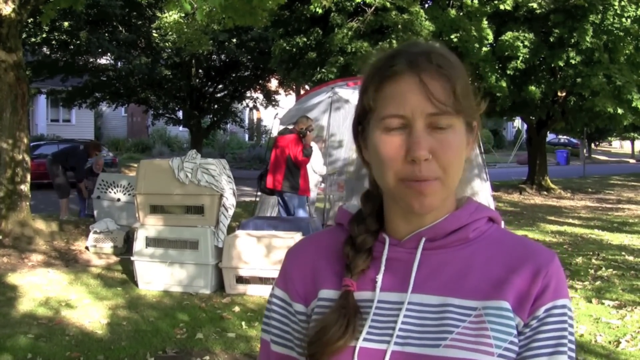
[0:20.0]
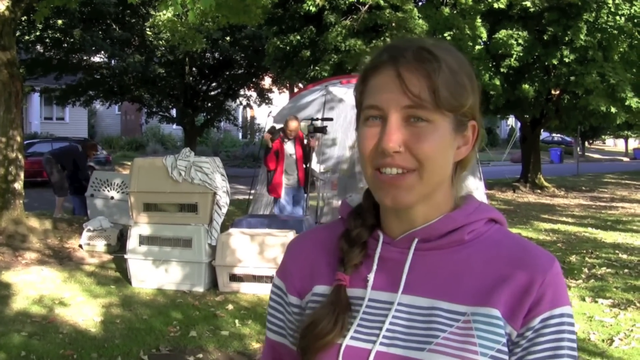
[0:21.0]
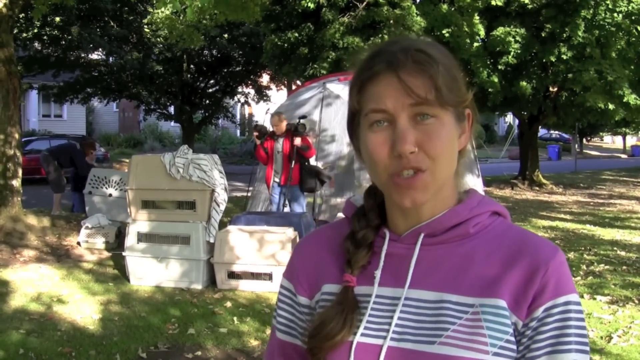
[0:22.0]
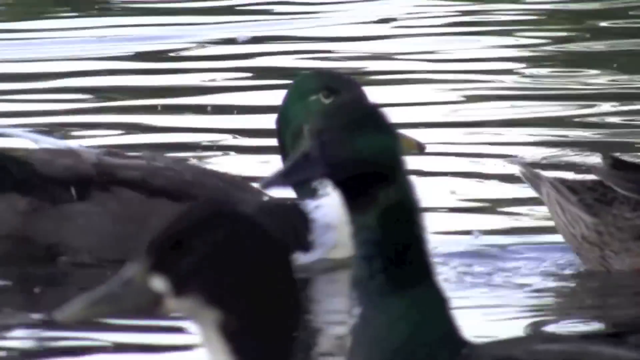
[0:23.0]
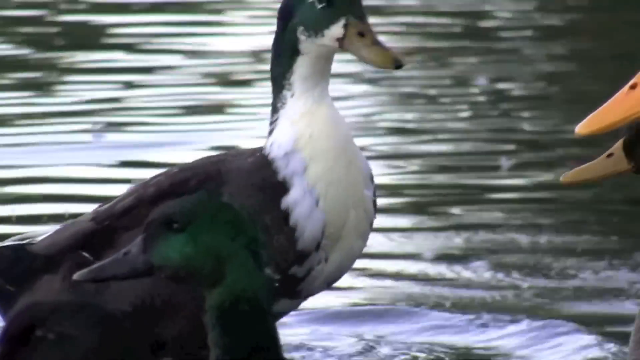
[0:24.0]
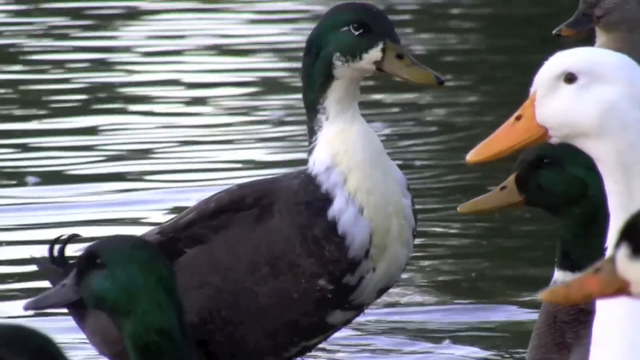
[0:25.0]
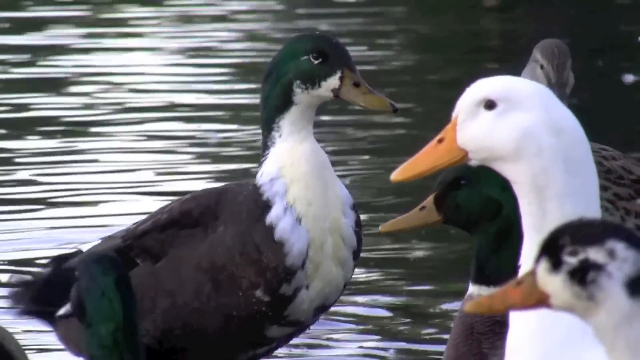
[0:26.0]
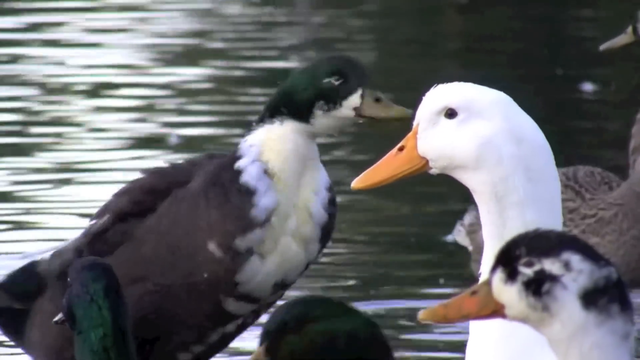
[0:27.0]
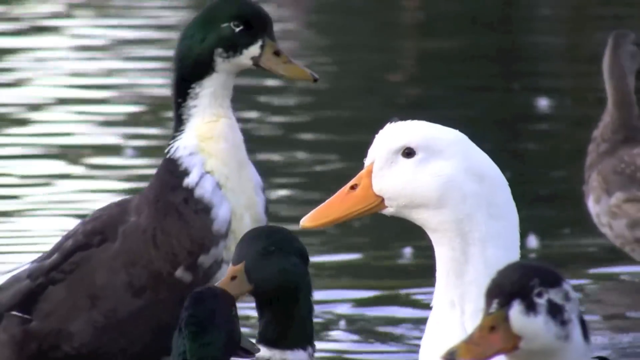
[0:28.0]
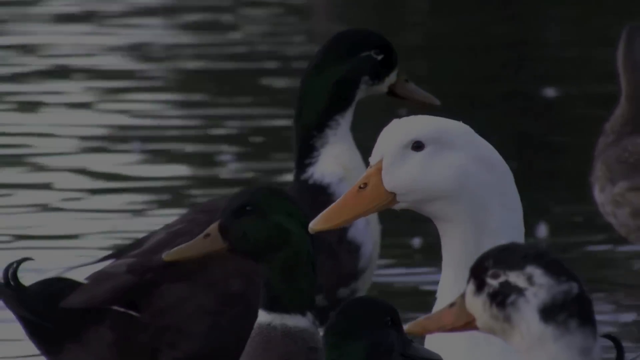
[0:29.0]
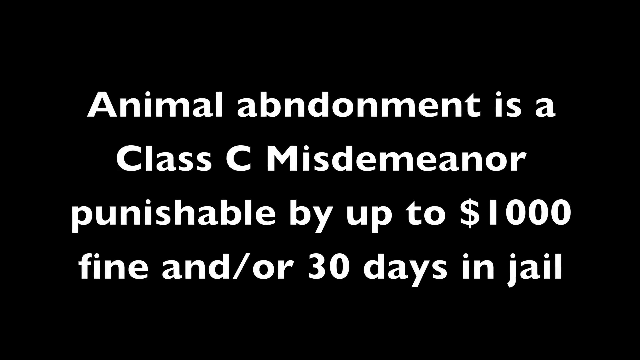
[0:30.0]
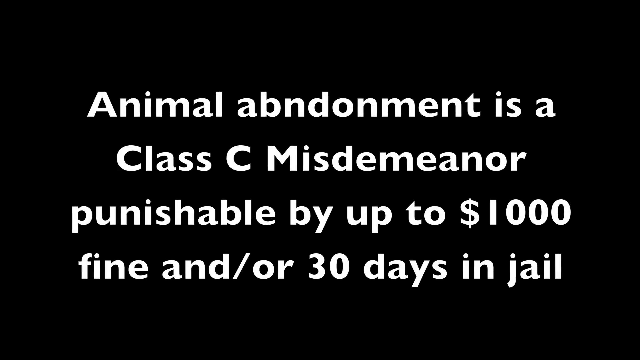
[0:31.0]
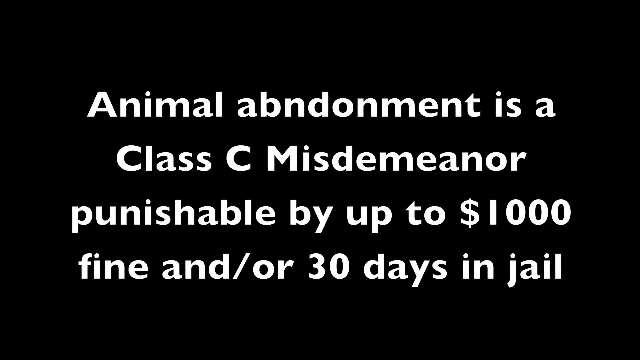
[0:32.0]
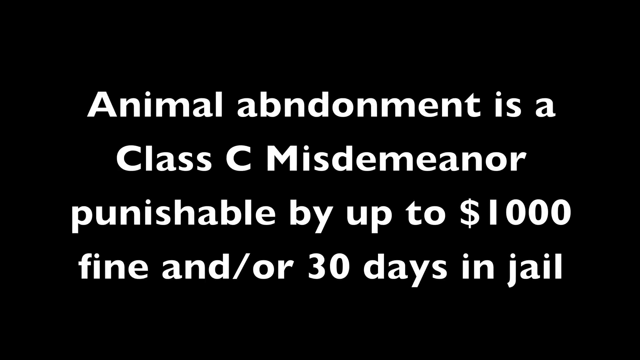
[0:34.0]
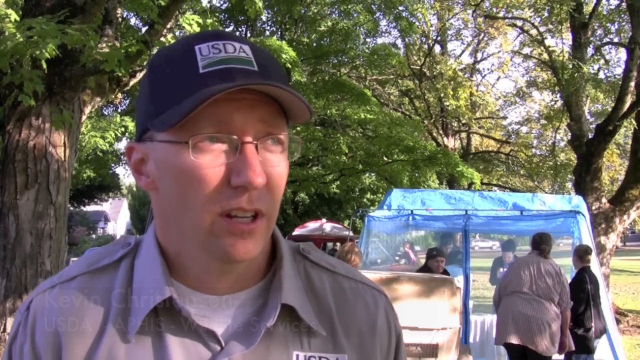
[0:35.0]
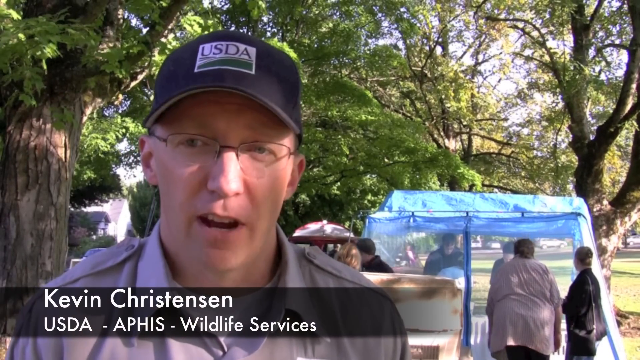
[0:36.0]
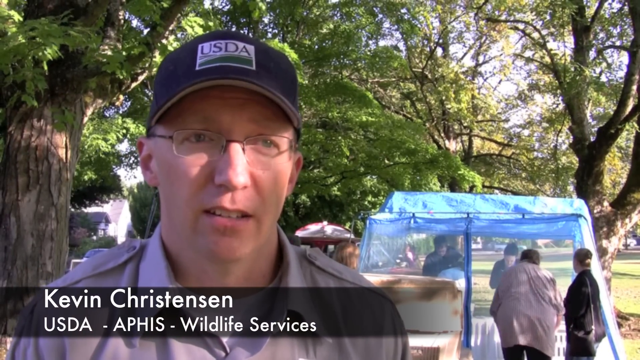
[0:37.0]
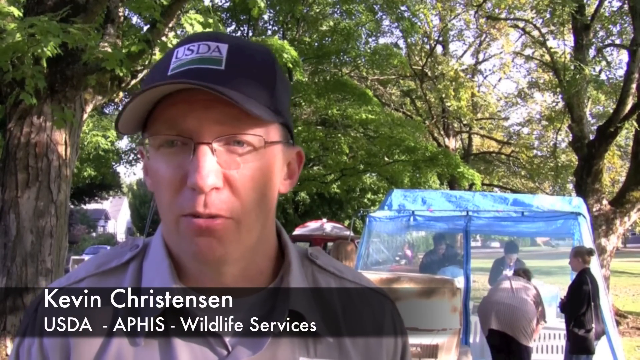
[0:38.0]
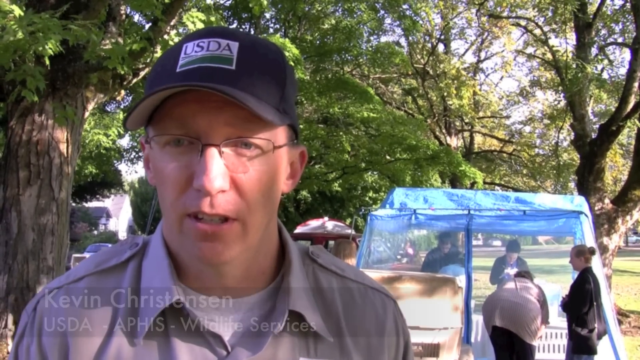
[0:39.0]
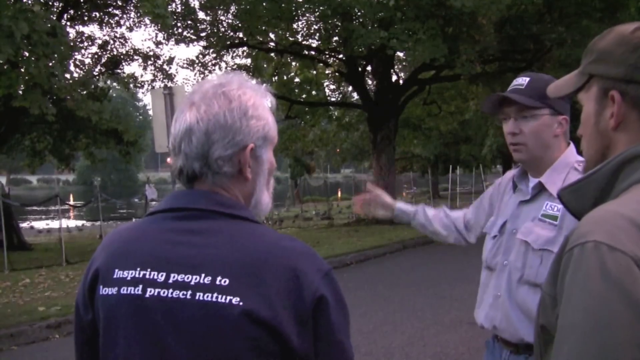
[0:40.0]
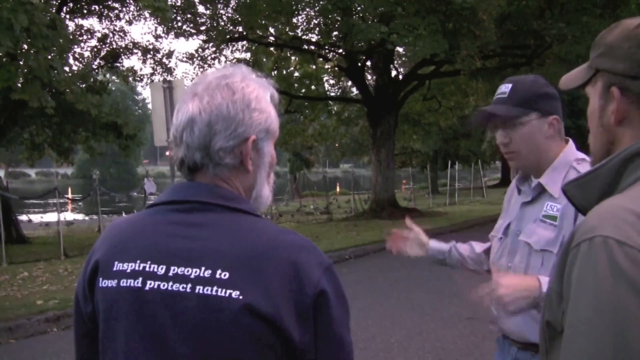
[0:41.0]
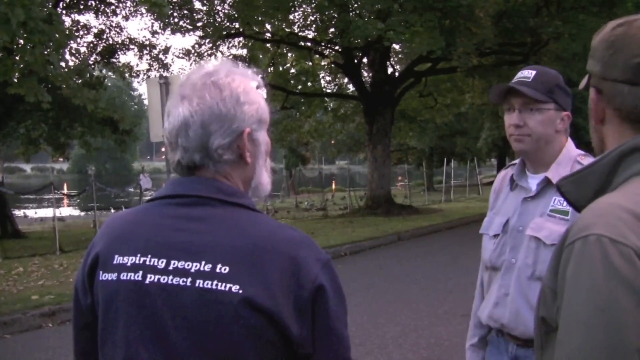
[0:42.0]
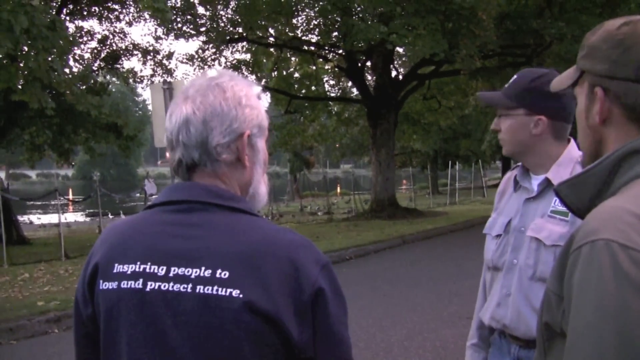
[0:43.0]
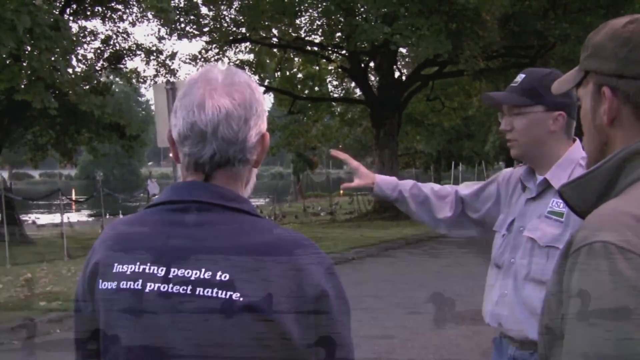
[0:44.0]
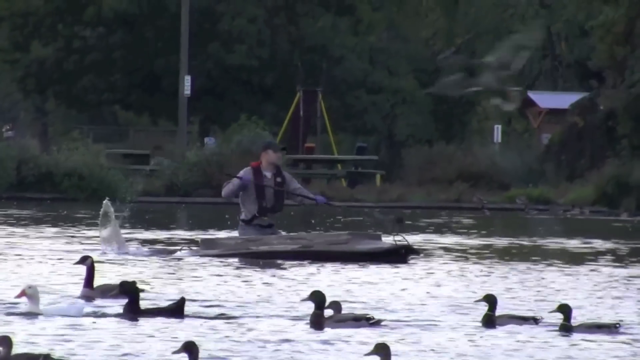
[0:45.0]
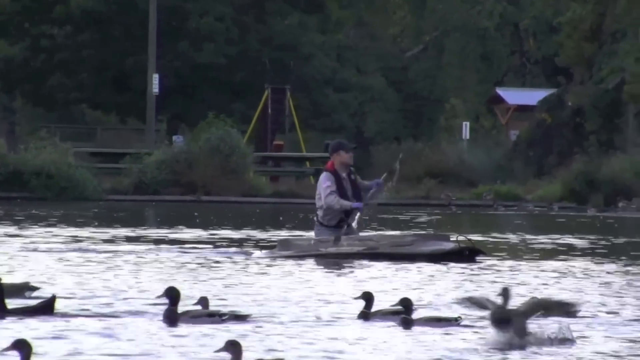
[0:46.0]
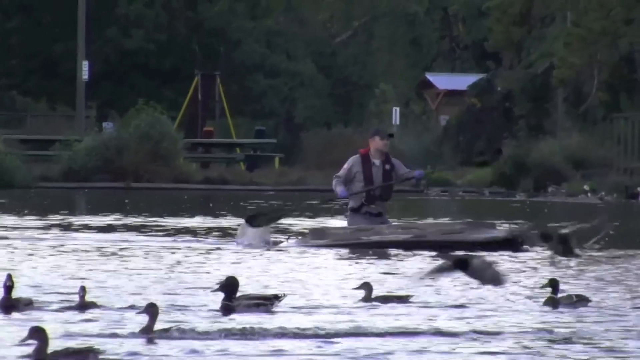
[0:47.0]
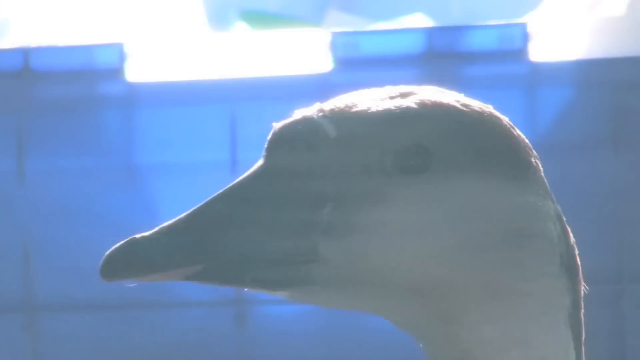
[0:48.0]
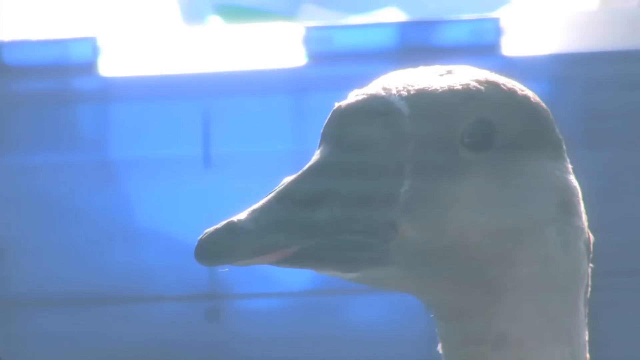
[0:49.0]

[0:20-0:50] A middle-aged white woman with long brown hair, braided with a pink ponytail, smiles at the camera as she speaks; two white strings hang from her purple hoodie. Behind her is a man with a camera wearing a white shirt and a red jacket, with a tent behind him, and in the far background is a residential area with houses and vehicles parked along the street. The video cuts to a zoomed-in shot of mallard ducks with green heads and white chests, along with a white duck with an orange beak, swimming together on a pond; there is a small grey duck with another small grey duck beside it. A black screen with white lettering reads "animal abandonment is a class C misdemeanor punishable by a $1,000 fine and or 30 days in jail". Next, a middle-aged white man with glasses and a dark blue ball cap bearing the letters "USDA" in the center is identified as Kevin Christensen, USDA APHIS Wildlife Services. He wears a gray short-sleeved button-up uniform shirt. Behind him is a tent with mosquito netting and a blue tarp roof, with two people inside and two women outside, one young and one heavyset. Kevin speaks to the camera, looking to the right. The scene changes to an elderly man with white hair and a white beard wearing a jacket that says "inspiring people to love and protect nature". Standing next to him are two white men in their late 20s, both in ball caps; one wears a jacket and the other a long-sleeved shirt, with a ring on his left ring finger. They stand in front of a grassy park area with multiple trees and a road running by. The video then shows a white man kayaking on a pond, followed by a zoomed-in shot of a duck's head looking directly at the camera.